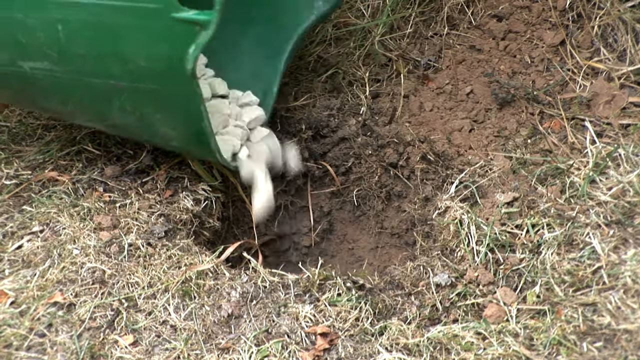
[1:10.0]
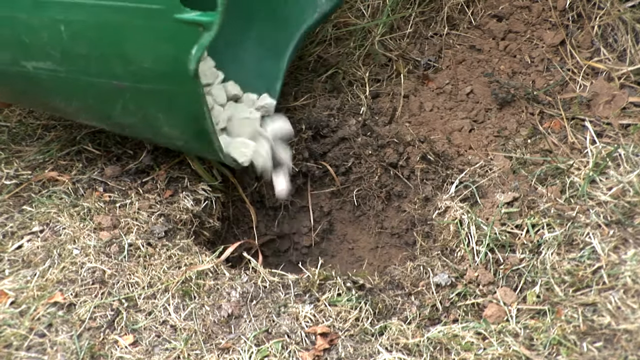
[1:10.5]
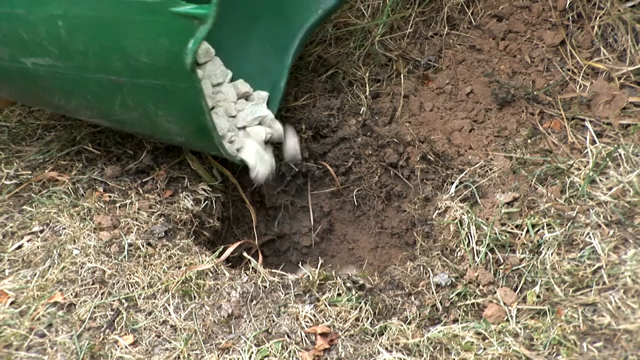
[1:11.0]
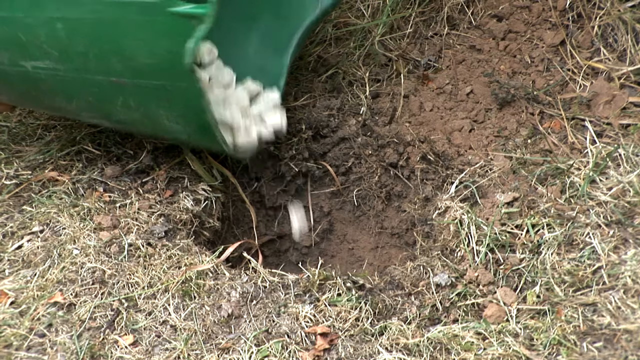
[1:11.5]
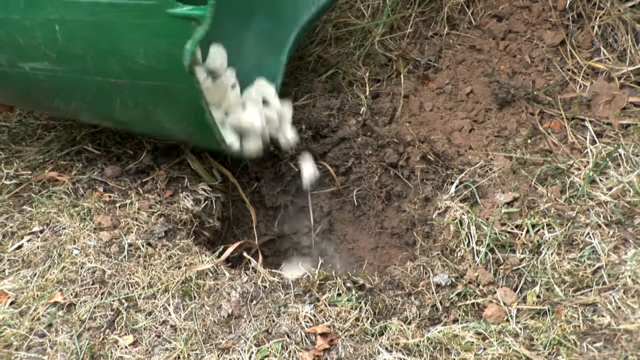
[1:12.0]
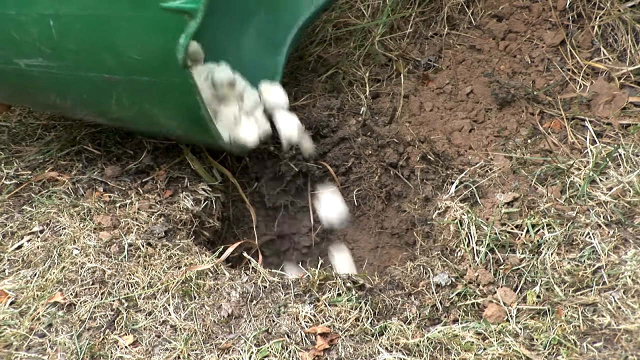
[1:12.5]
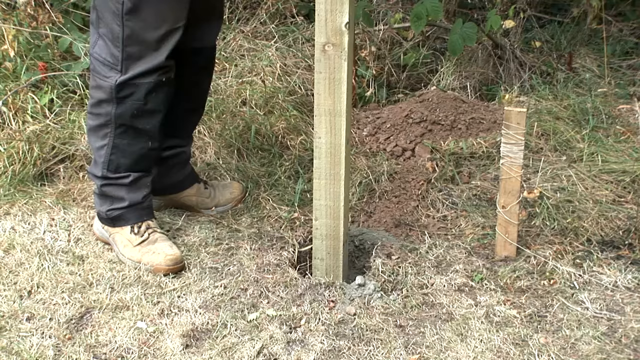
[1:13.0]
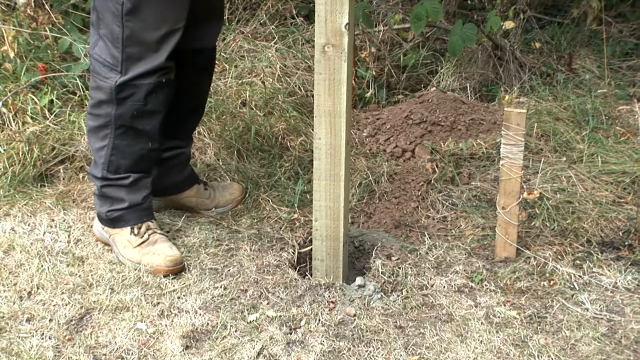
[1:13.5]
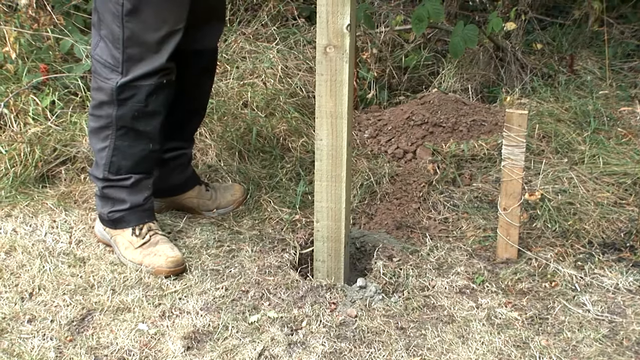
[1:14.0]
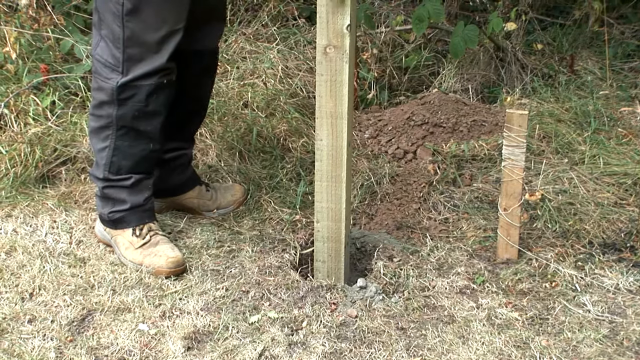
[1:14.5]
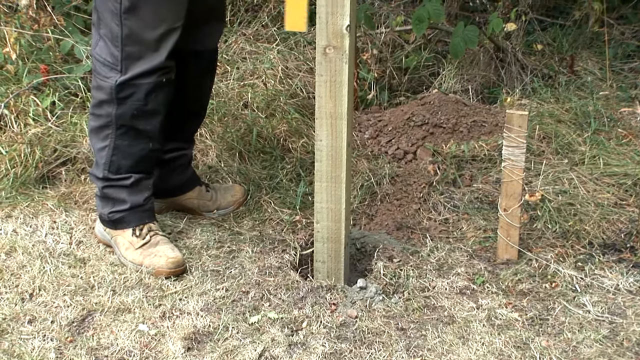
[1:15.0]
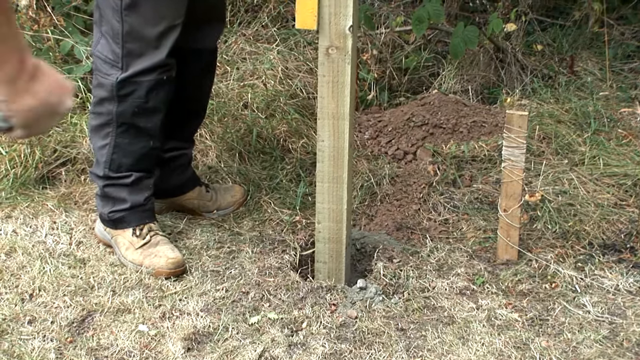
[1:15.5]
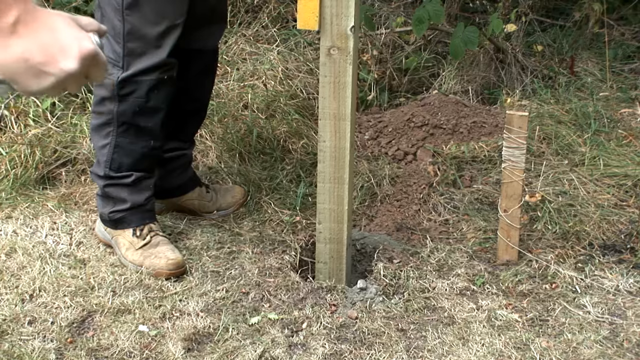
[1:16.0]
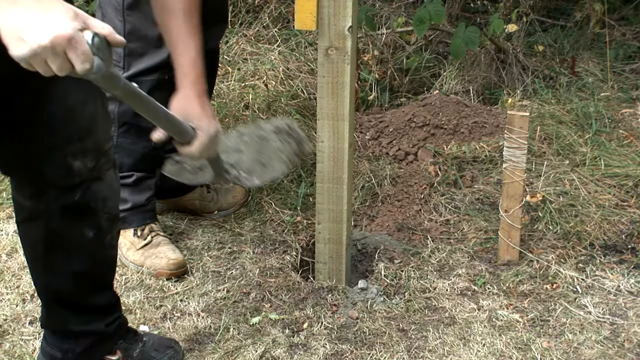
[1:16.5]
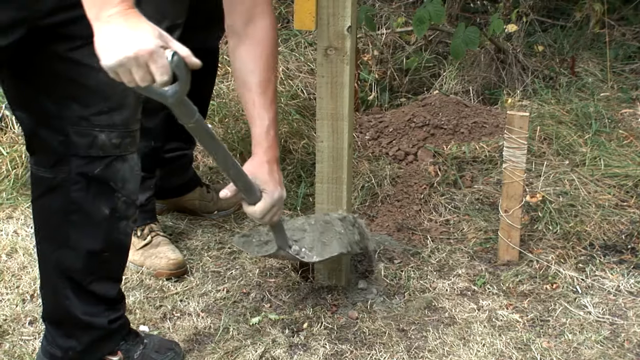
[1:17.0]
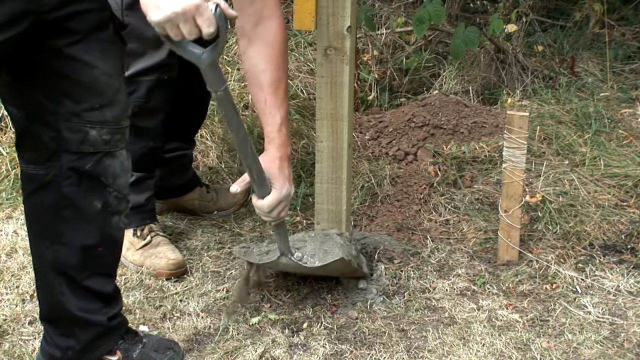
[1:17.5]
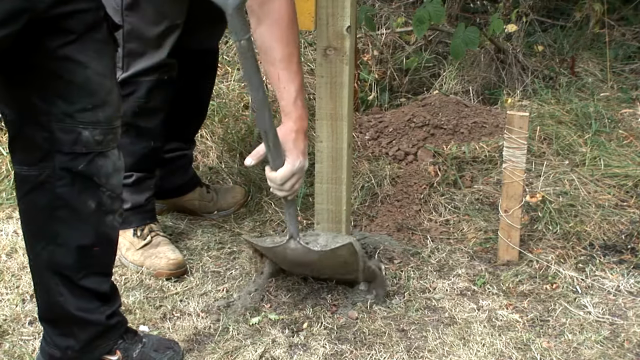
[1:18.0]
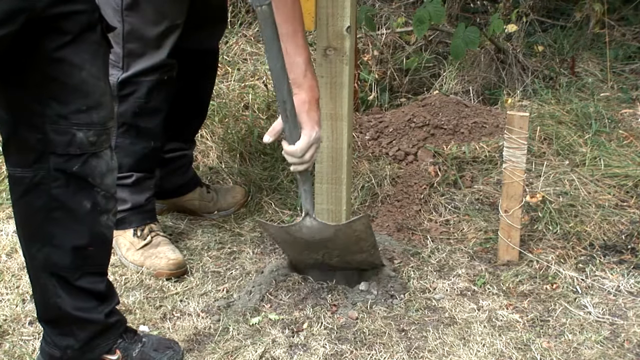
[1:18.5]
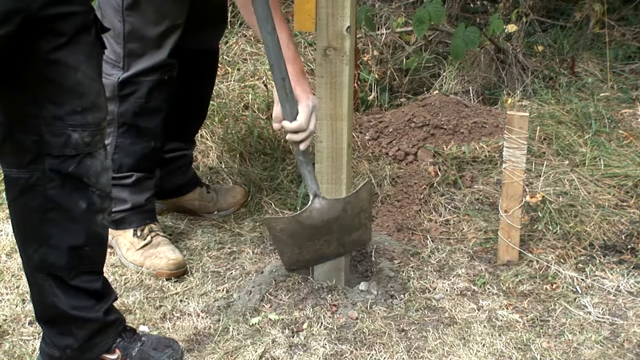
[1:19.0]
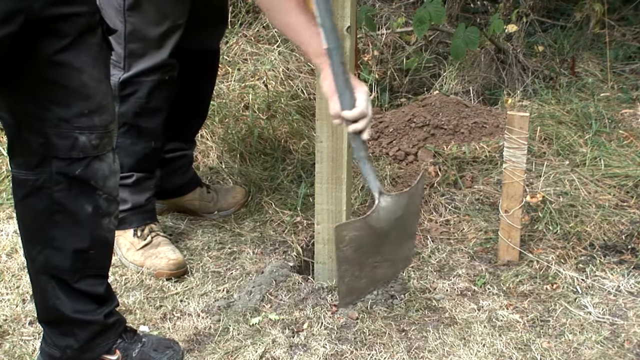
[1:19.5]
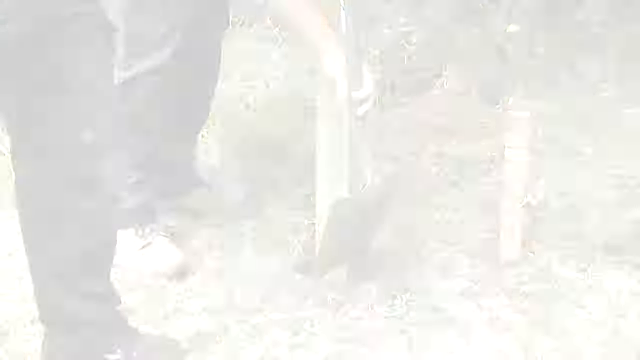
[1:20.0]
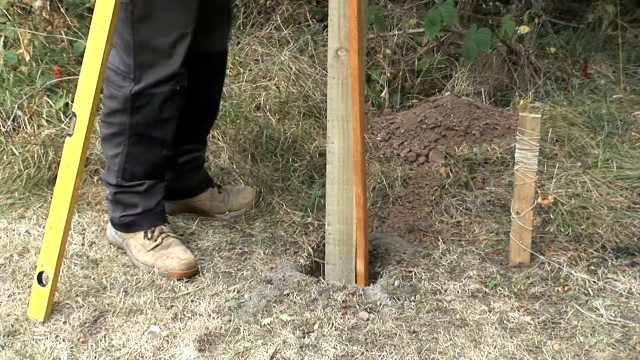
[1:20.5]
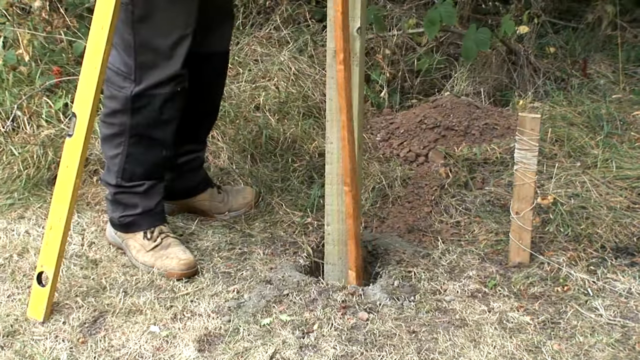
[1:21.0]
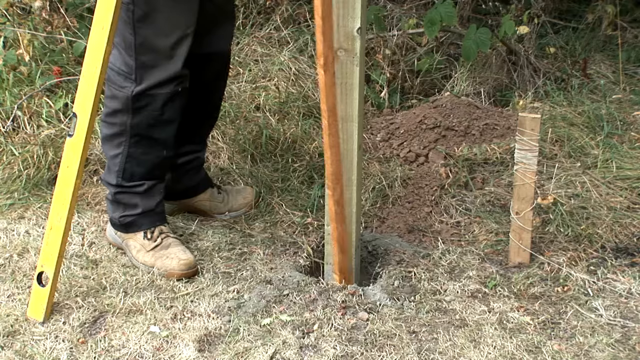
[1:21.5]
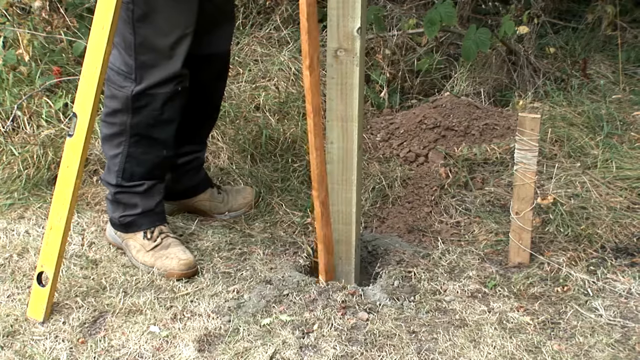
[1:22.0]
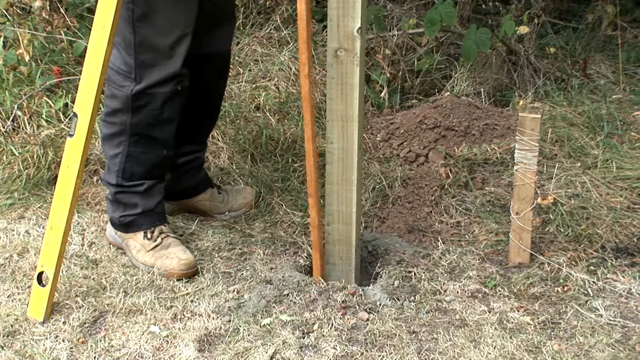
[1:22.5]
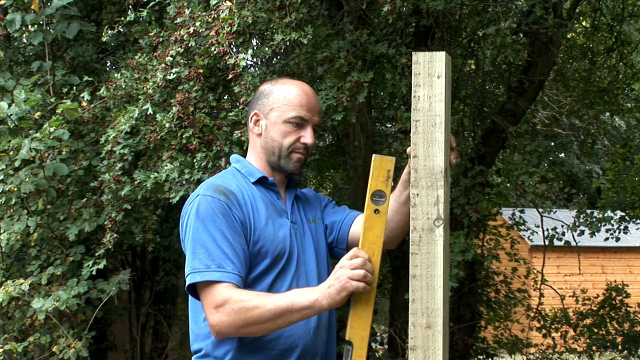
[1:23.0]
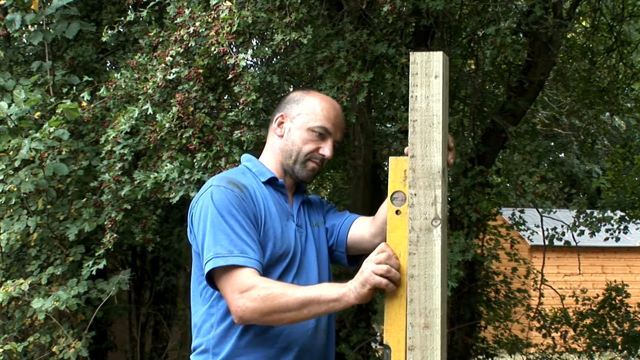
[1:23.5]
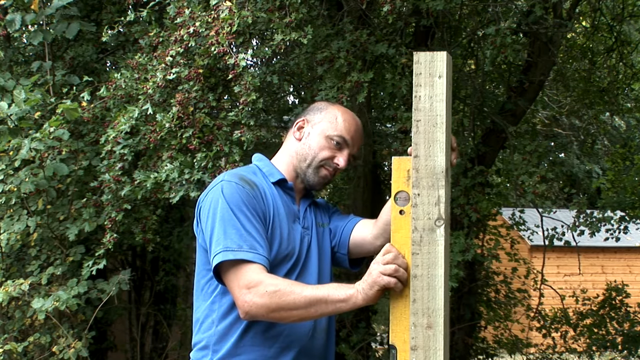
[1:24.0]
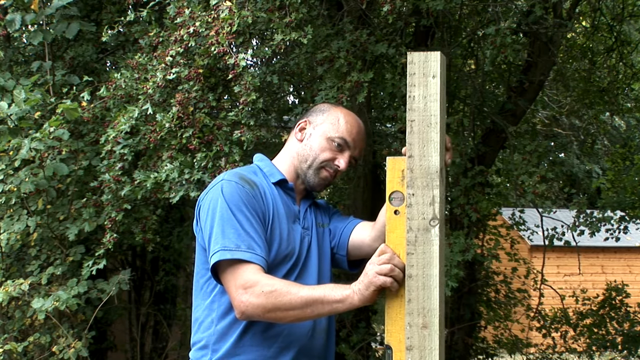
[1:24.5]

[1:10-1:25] Someone holds a green bucket of white rocks and dumps them into a hole in the ground. A man then puts a large piece of brown wood, a fence post, into the hole. The man in black pants and brown boots holds a level against the side of the brown fence post to check that it is straight up and down before dirt is added. Another man, in black pants and black boots, shovels dirt into the hole to firm up the fence post. Around him are trees, and a small brown shed with a black roof is briefly visible.